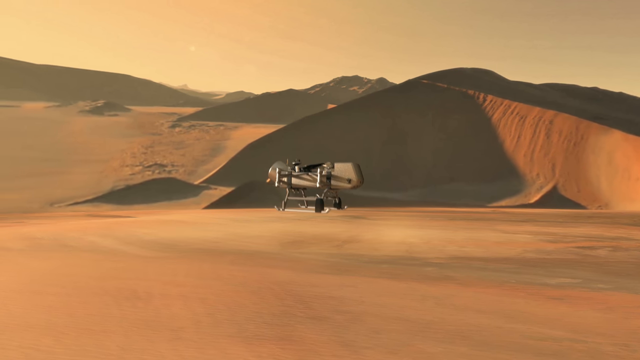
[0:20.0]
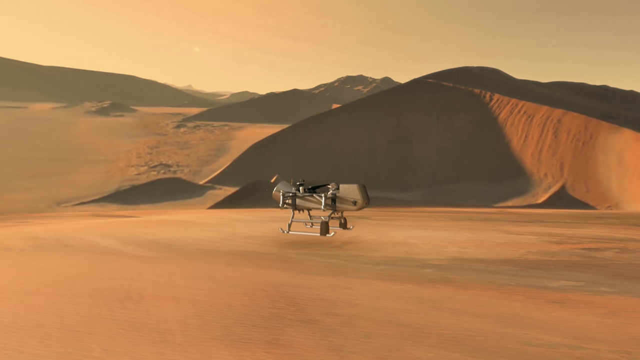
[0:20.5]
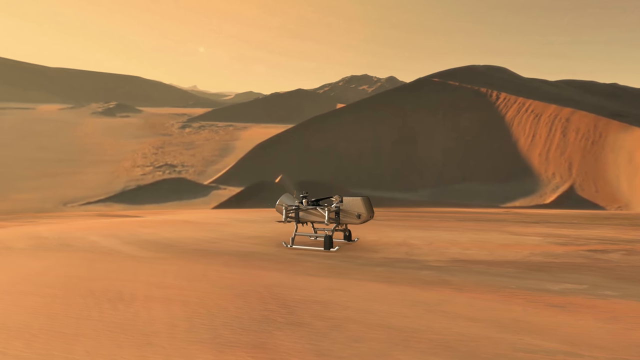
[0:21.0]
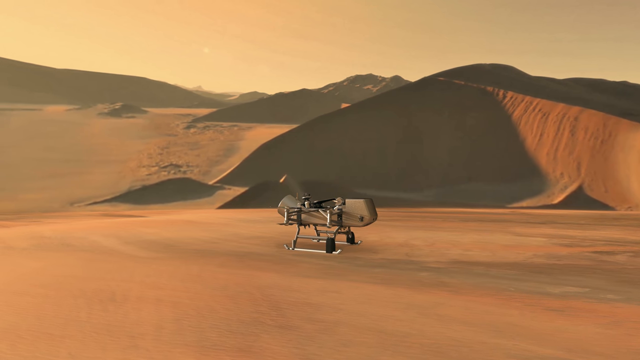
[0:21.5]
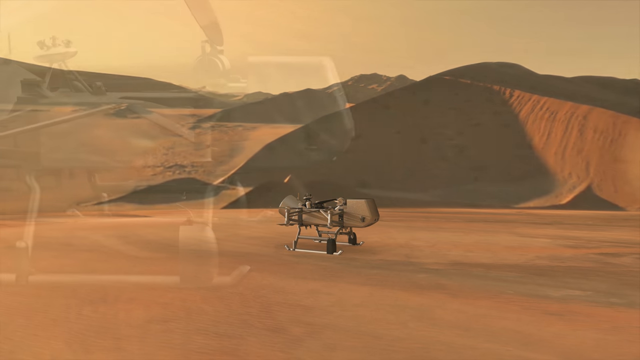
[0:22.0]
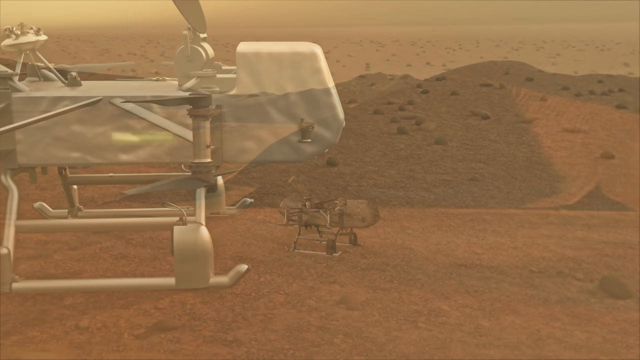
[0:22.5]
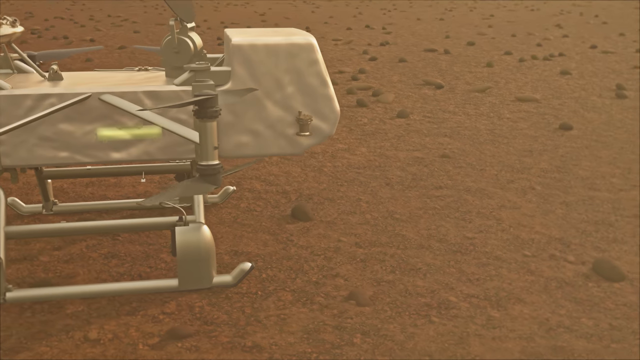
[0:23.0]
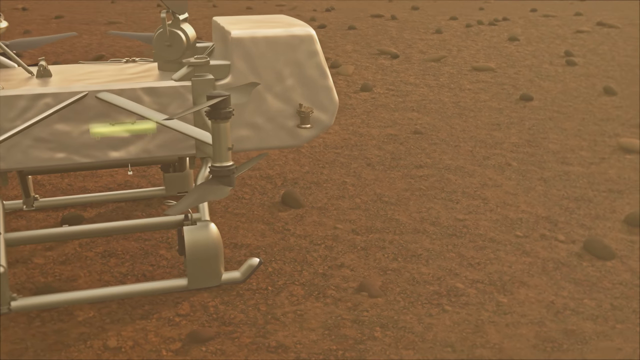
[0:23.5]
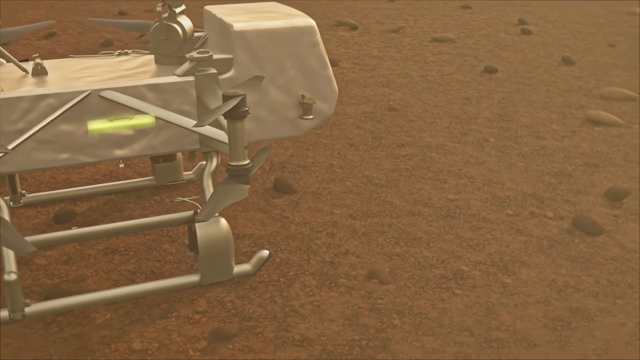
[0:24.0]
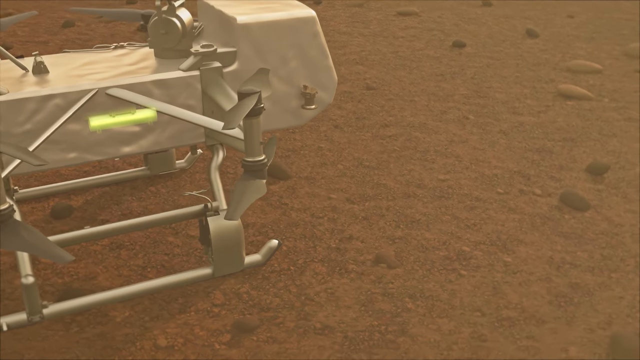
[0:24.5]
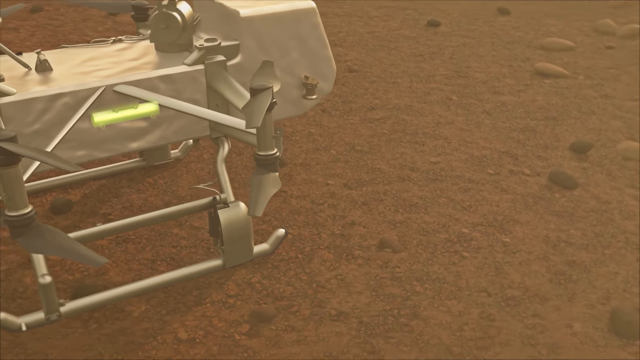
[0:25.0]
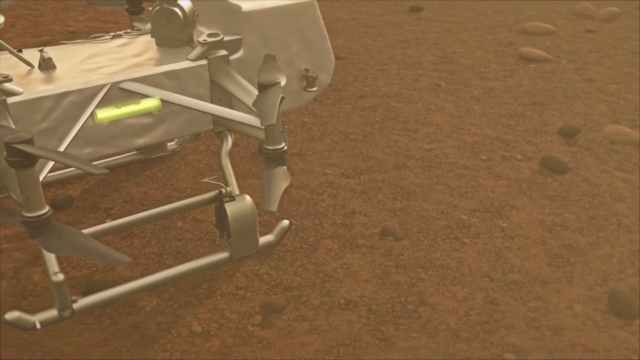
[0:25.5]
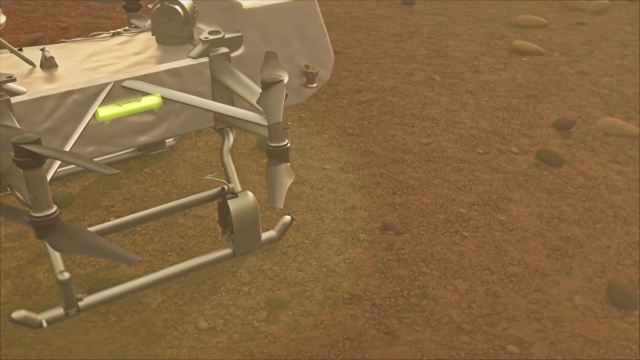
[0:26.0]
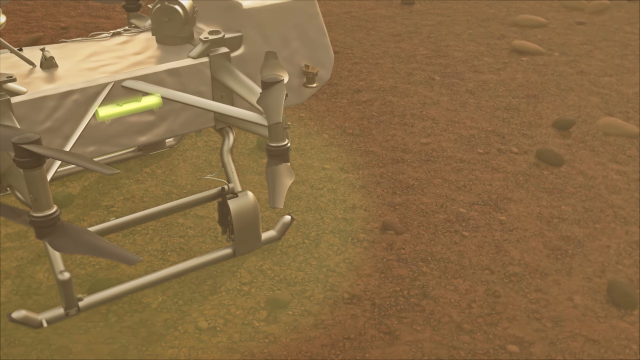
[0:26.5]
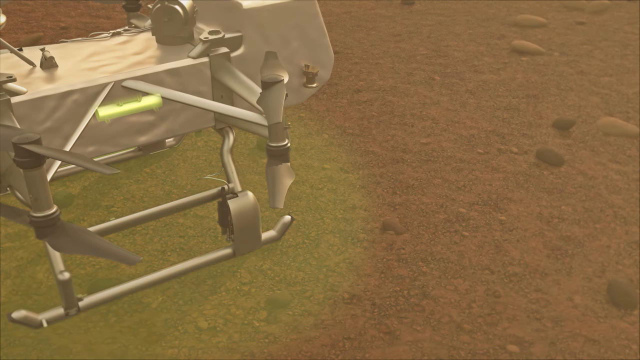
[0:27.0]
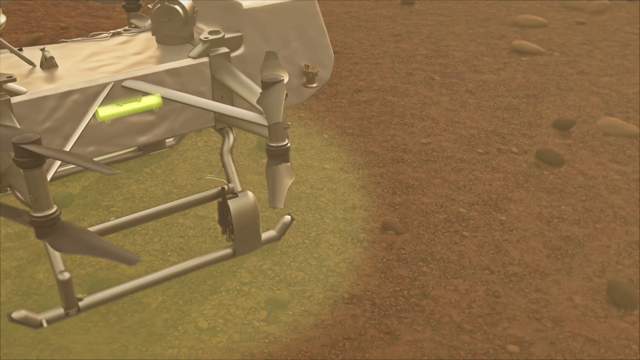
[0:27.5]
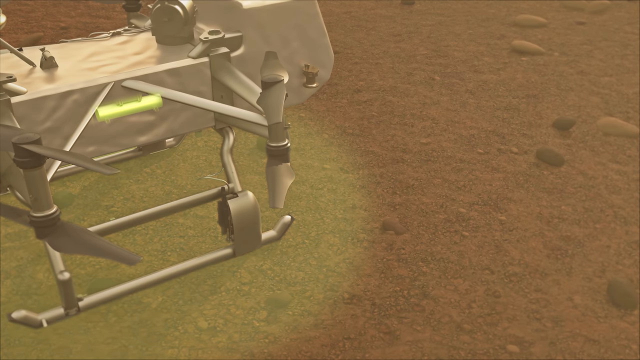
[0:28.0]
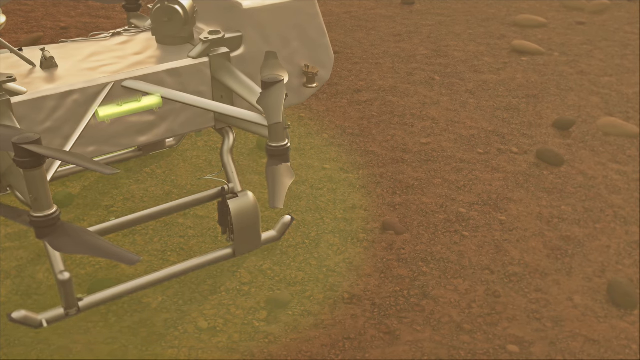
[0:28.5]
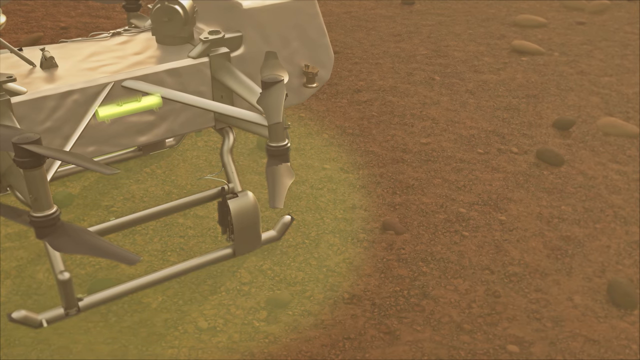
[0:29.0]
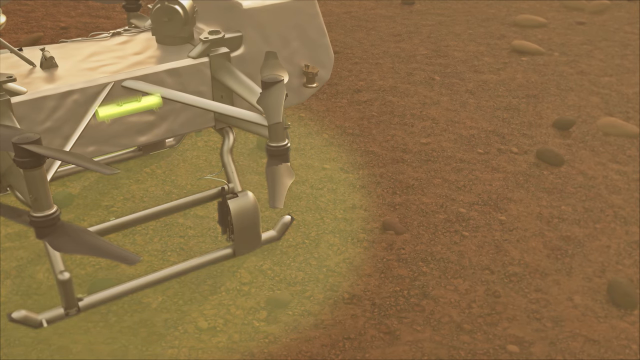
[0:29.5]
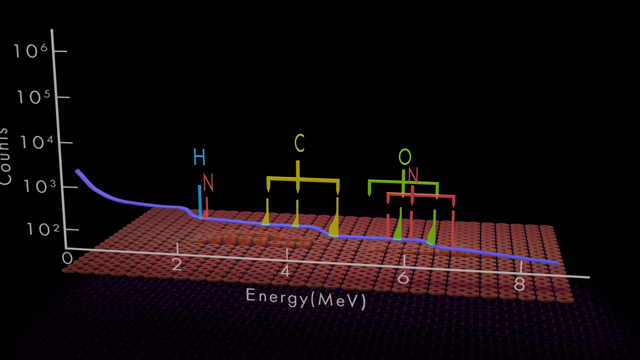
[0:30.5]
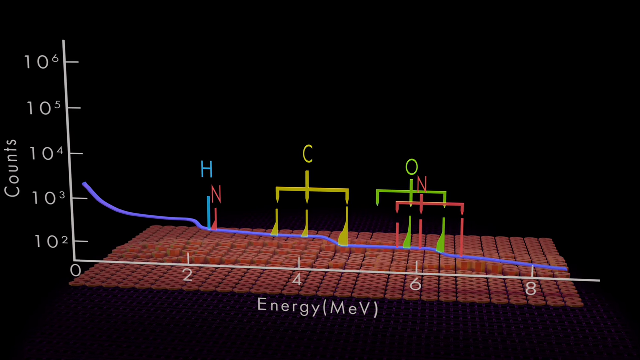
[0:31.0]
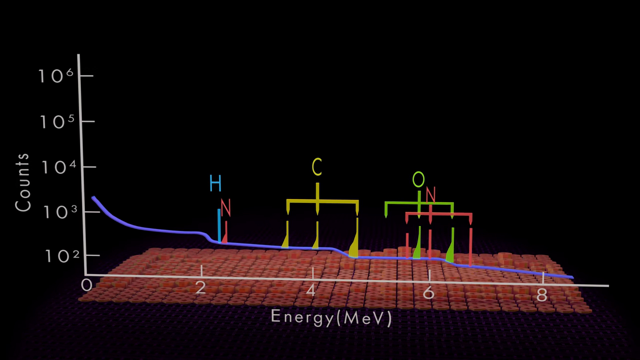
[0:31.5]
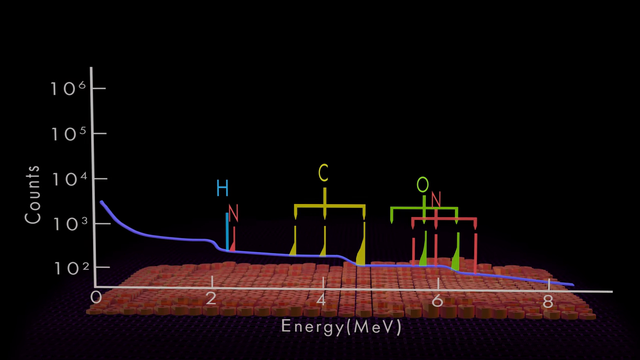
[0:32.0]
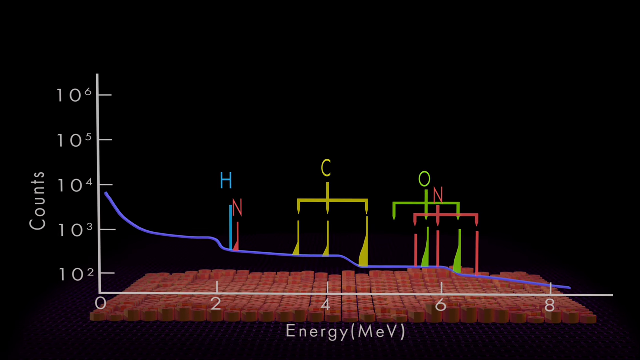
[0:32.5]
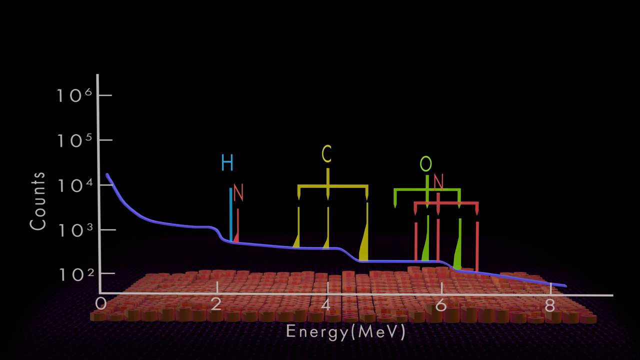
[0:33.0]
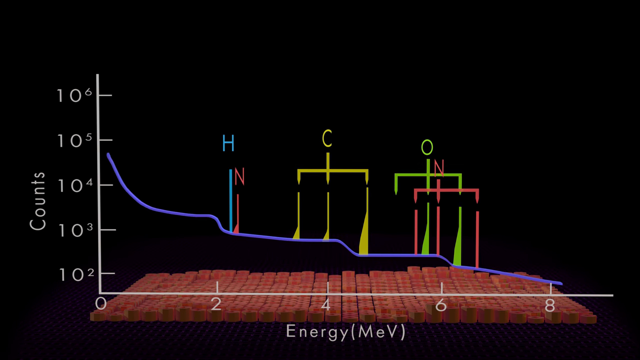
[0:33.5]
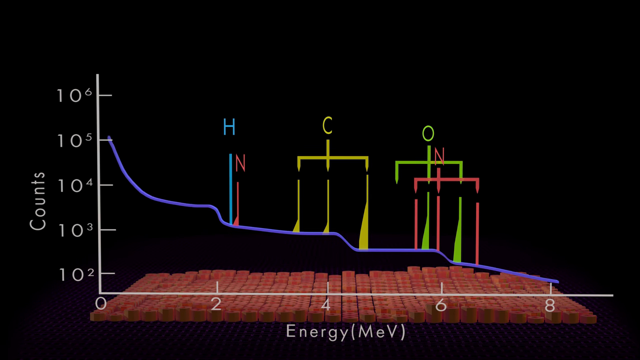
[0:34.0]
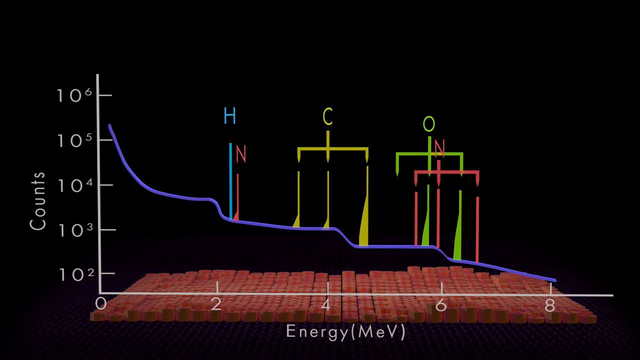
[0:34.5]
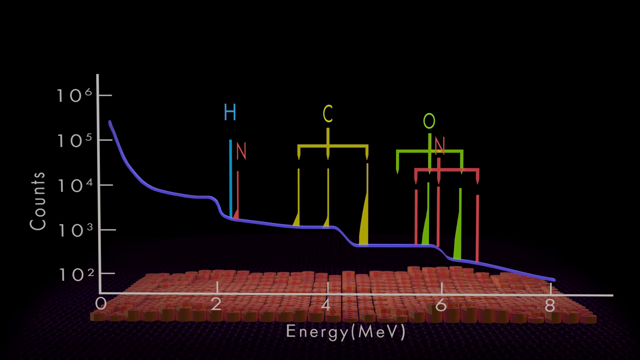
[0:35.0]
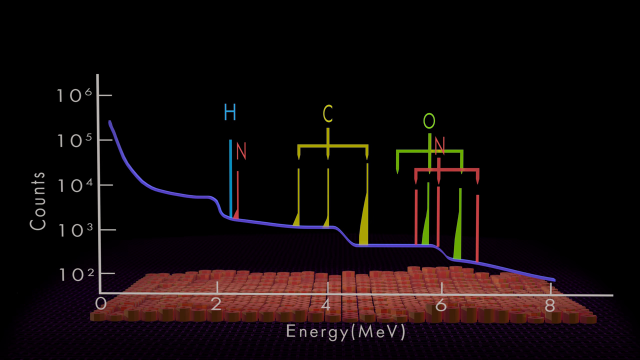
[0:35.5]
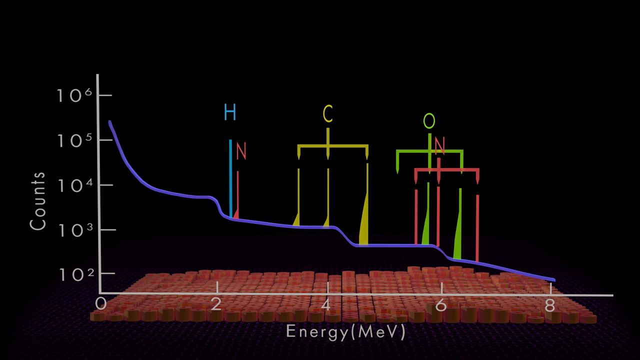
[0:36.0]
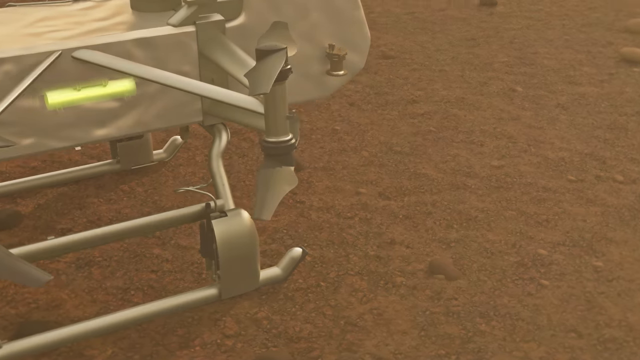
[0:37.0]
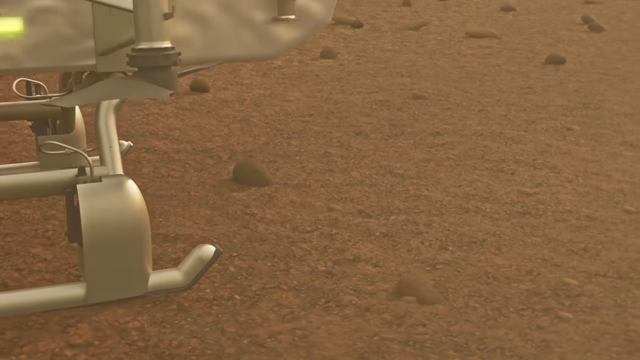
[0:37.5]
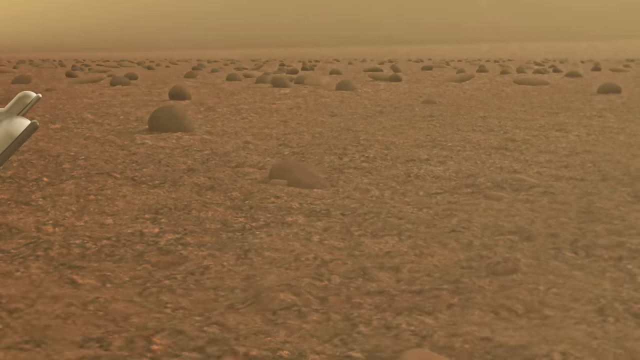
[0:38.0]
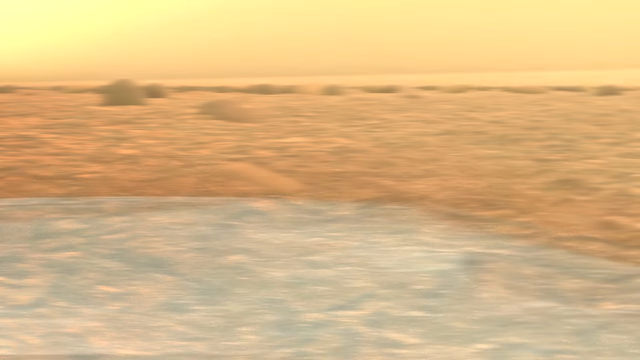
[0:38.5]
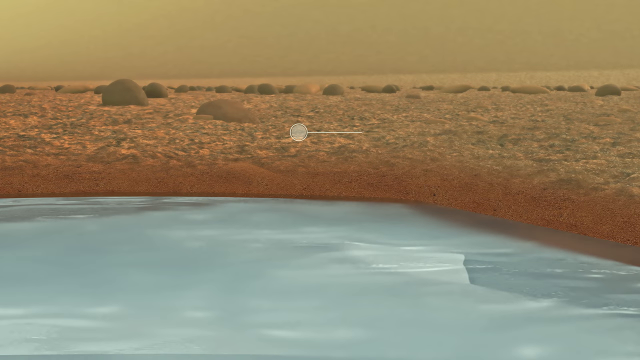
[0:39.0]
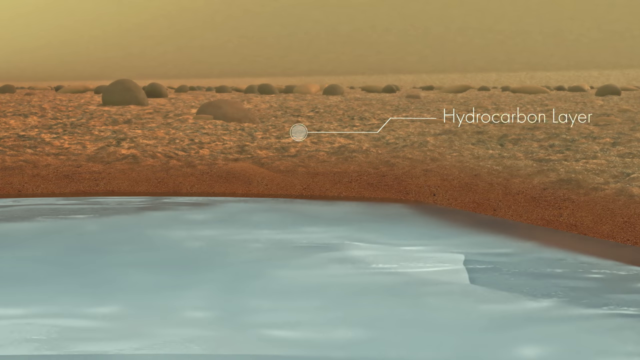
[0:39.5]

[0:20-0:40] The drone lands on the floor of the planet, a dirt ground with hills in the background; desert-like sand and dirt is mostly what is visible. The view changes to a close, zoomed-in shot from over top of the drone, circling around it clockwise. The drone is white with metal arms and legs, and in its center a rectangular yellow flashing light illuminates the ground, making the ground flash. The scene transitions to a black background with a sort of graph. Along the left side are vertical numbers, with the word "counts" to the left of them, and along the bottom are more numbers running left to right. The floor of the graph is red, with yellow, red and blue lines and a purple parallel line. The camera view moves down as the yellow, red and blue lines begin to rise, and the purple graph line continues upward to close to a 45-degree angle. The scene returns to the planet, showing dirt with what look like several rocks, and the lower right-hand corner of the drone. The camera angle goes all the way down to ground level, looking straight ahead at the dirt and rocky area.